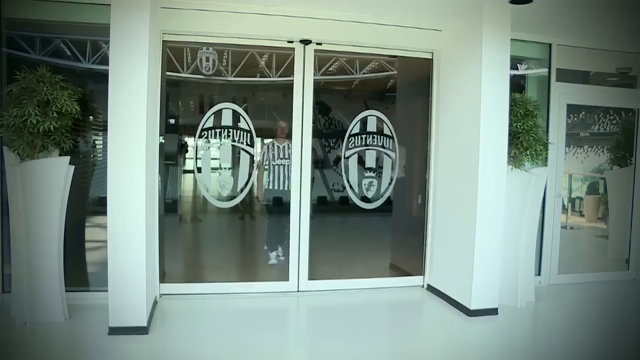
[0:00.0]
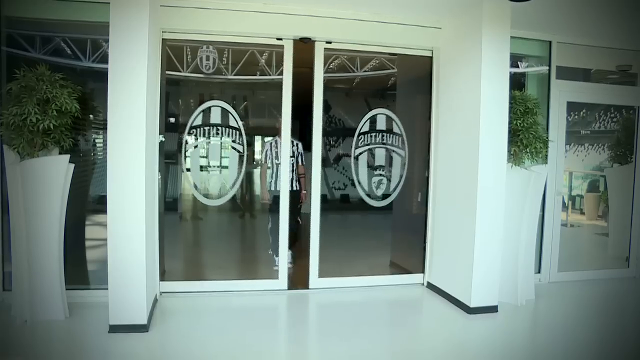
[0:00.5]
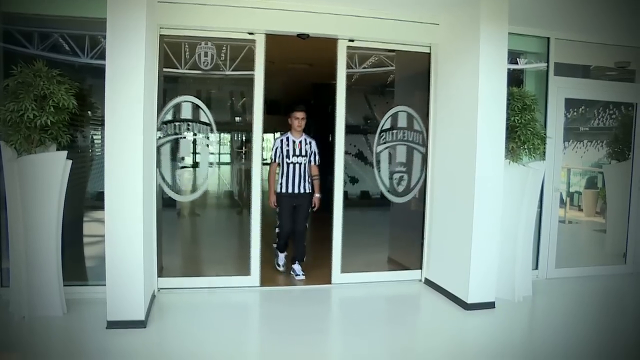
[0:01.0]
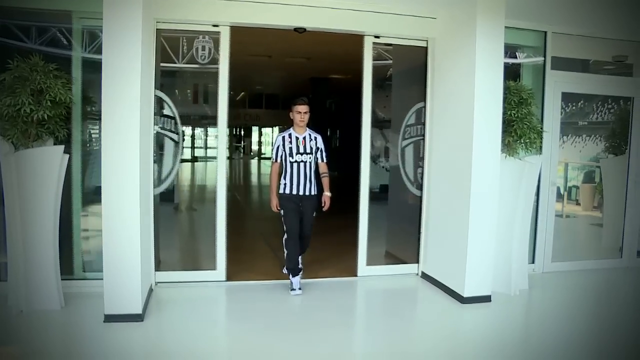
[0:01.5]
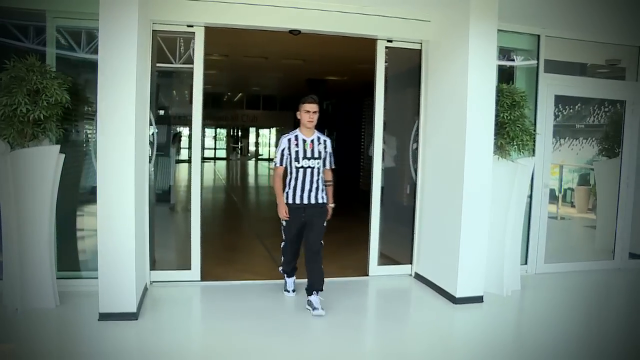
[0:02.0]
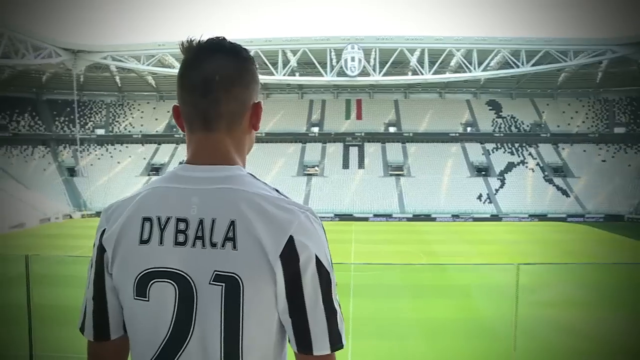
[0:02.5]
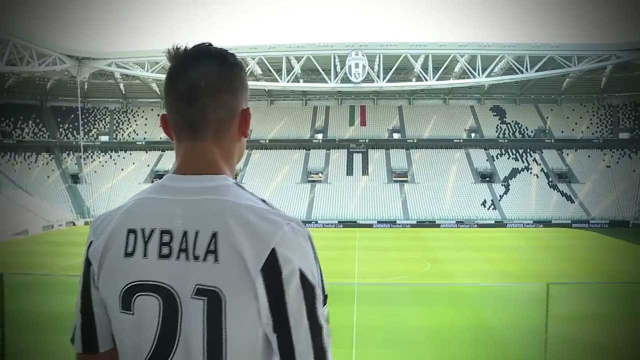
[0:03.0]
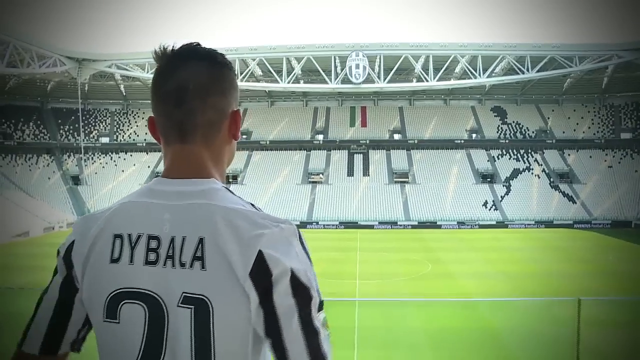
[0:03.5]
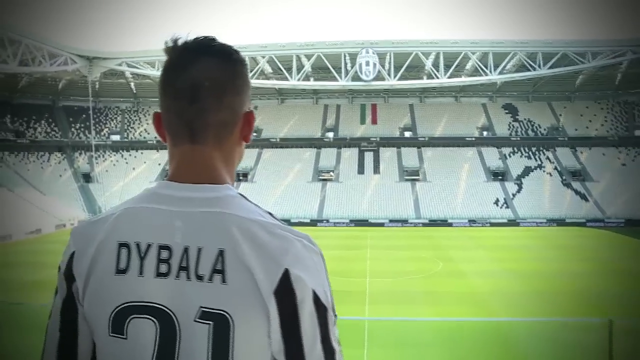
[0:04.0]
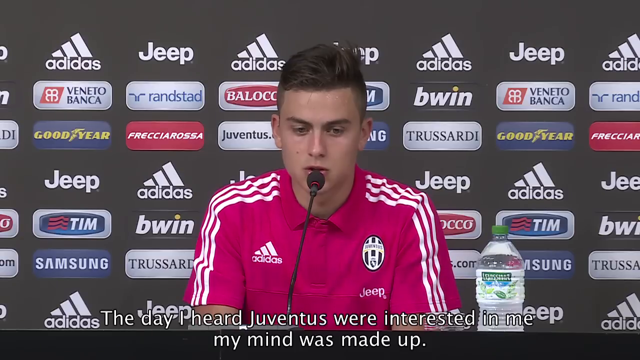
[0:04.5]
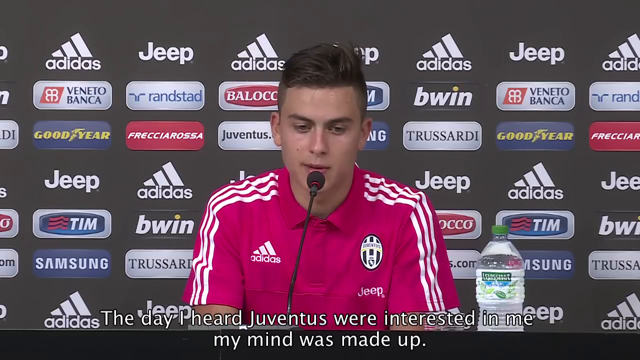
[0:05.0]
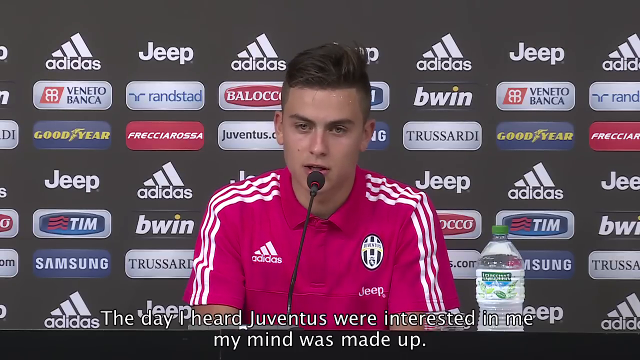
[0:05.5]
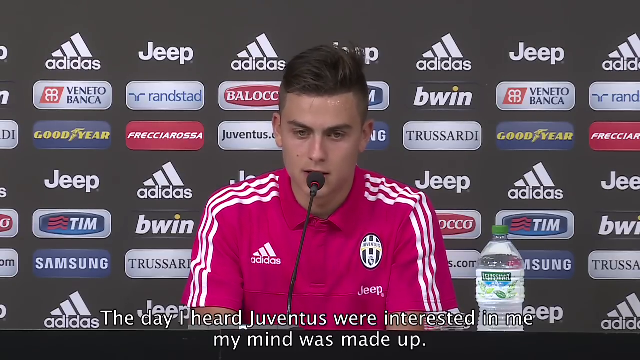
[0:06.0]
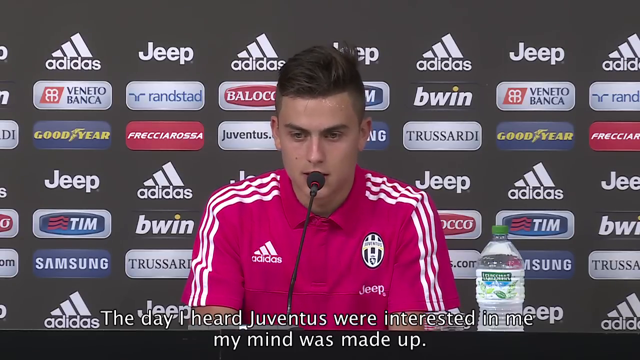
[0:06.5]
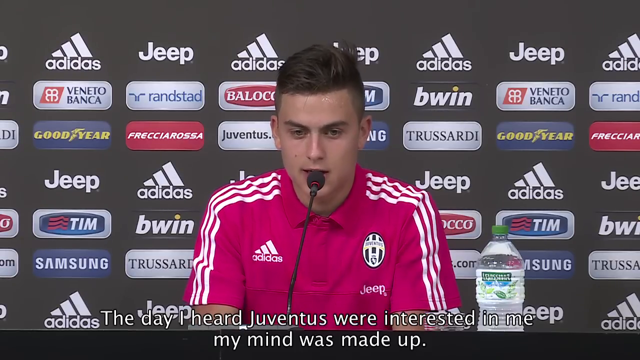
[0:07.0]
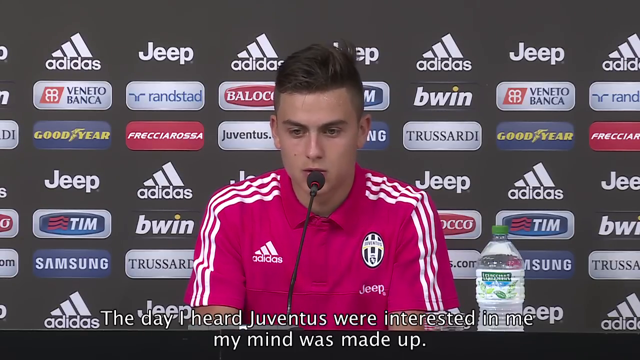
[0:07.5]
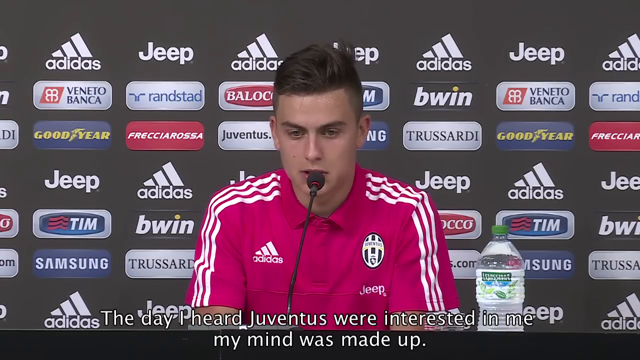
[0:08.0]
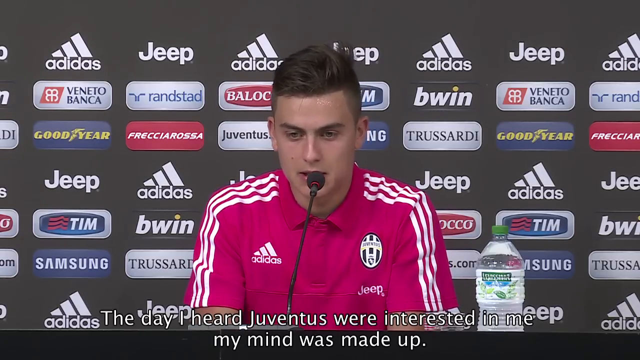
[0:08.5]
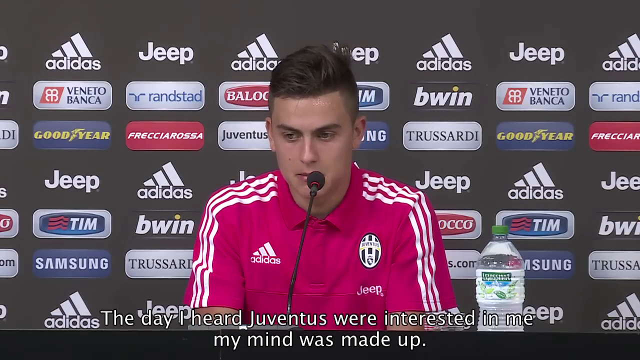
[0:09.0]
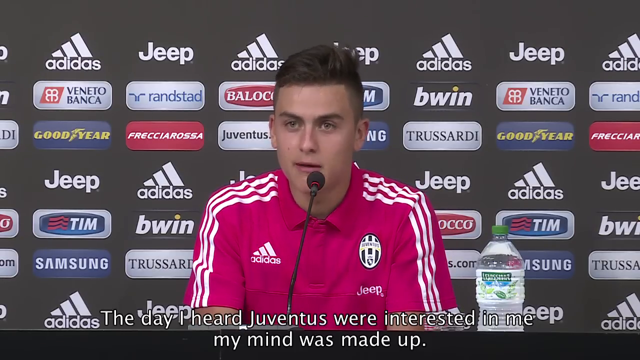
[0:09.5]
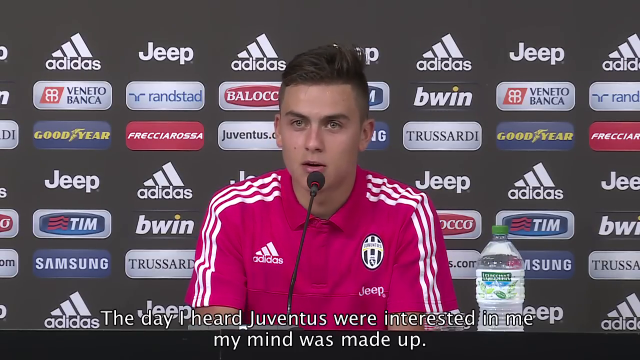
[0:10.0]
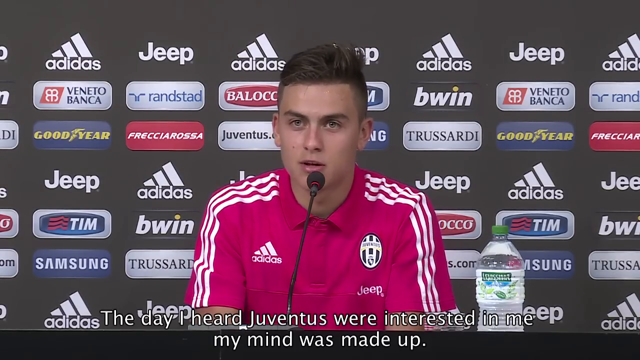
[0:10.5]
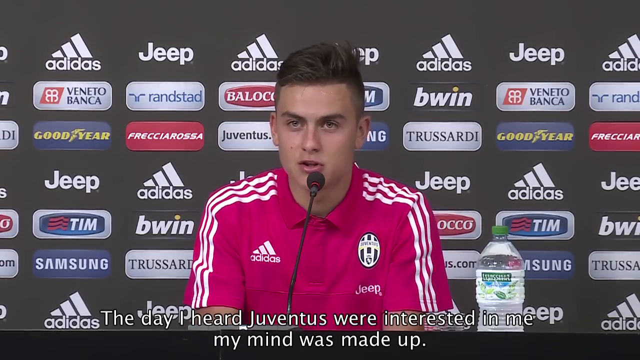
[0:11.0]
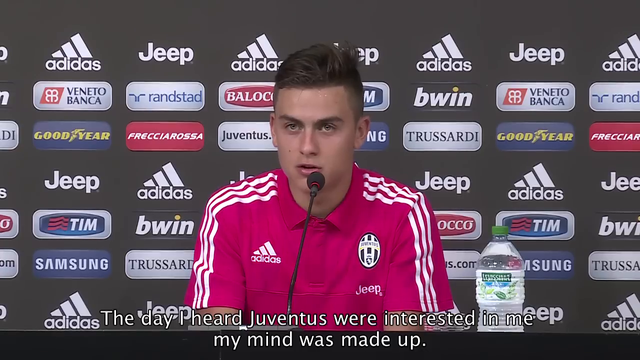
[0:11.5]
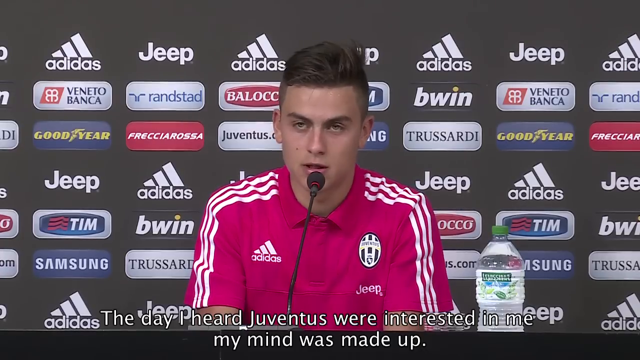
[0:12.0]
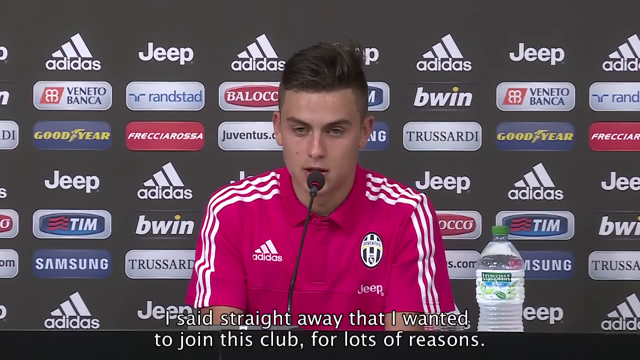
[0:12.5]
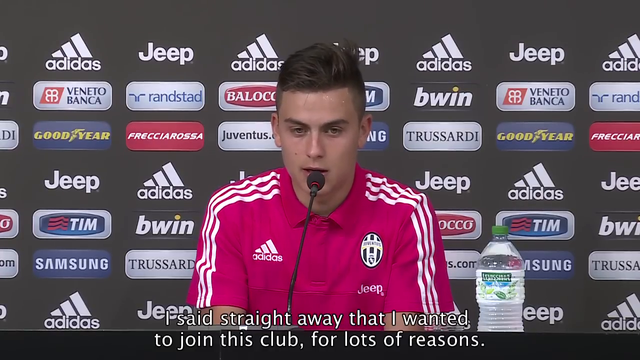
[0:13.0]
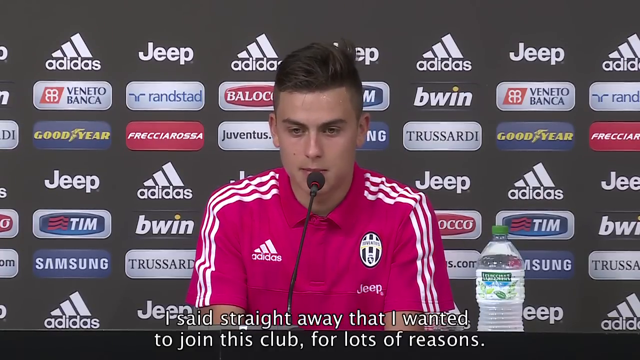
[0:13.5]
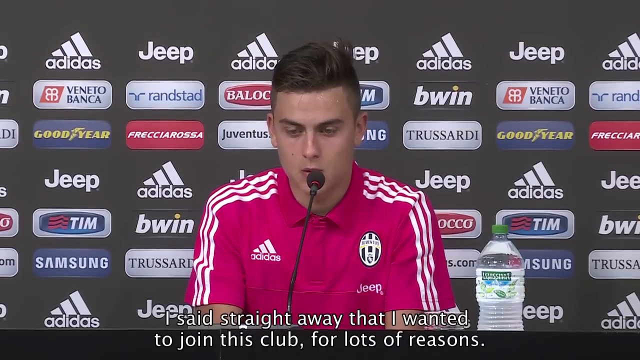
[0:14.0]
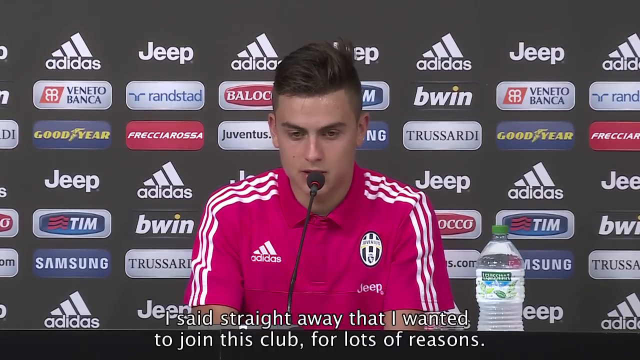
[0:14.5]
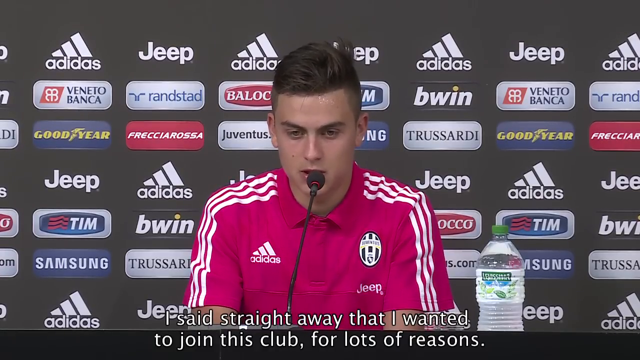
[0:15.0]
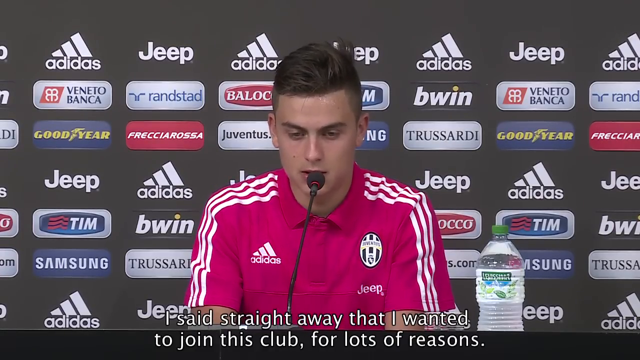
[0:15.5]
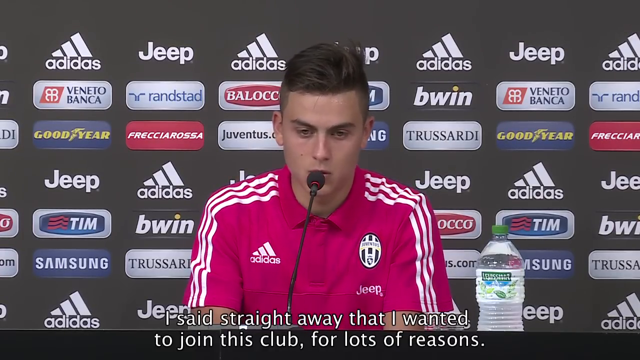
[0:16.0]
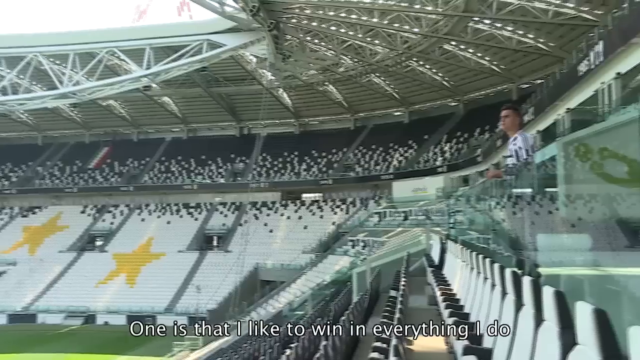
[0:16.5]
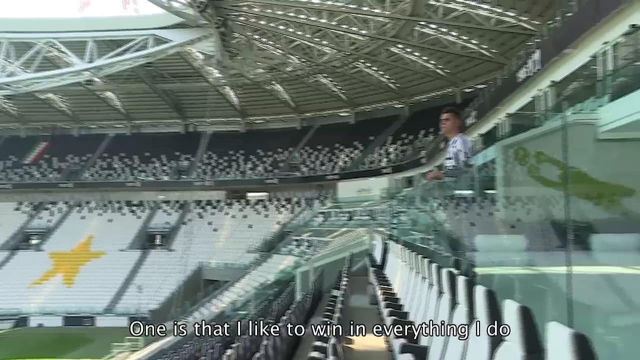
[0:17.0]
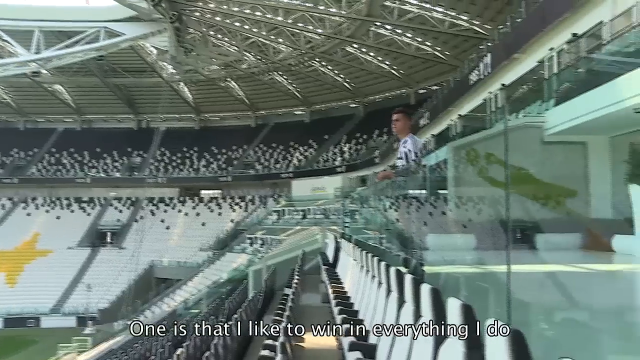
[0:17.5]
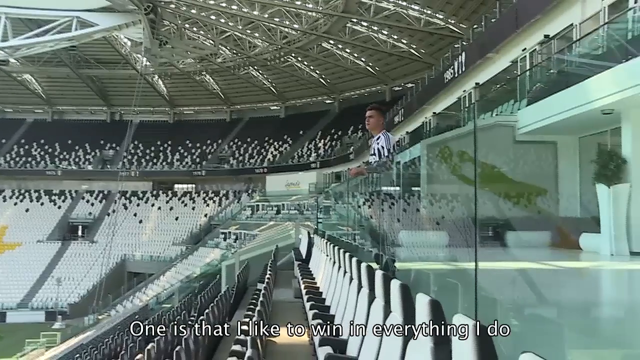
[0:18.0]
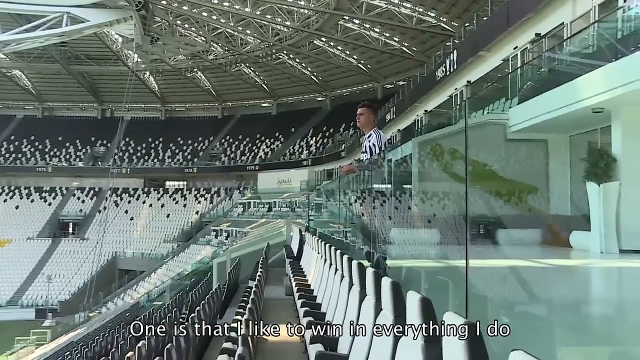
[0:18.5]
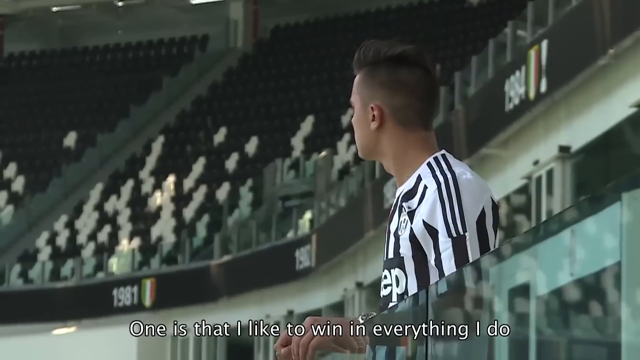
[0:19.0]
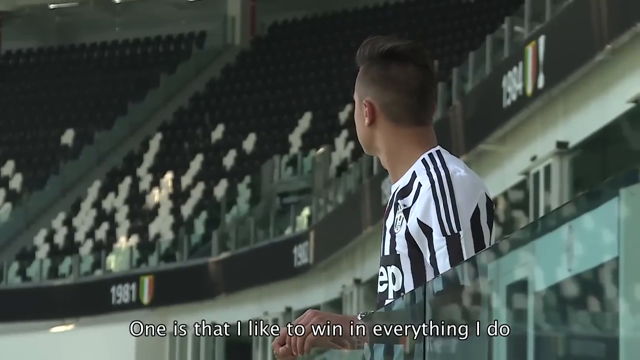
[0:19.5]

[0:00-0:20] The video opens with the introduction of Paolo Dybala for the Italian soccer team Juventus. He wears a bright pinkish Adidas collared shirt, and several ads are in the background behind him, including the Adidas logo, Jeep, the Goodyear logo, Bwin, Trussardi, Samsung, Veneto Banca and Juventus.com. He appears to be at a conference speaking to journalists and interviewers, looking down toward them with a microphone in front of his face.